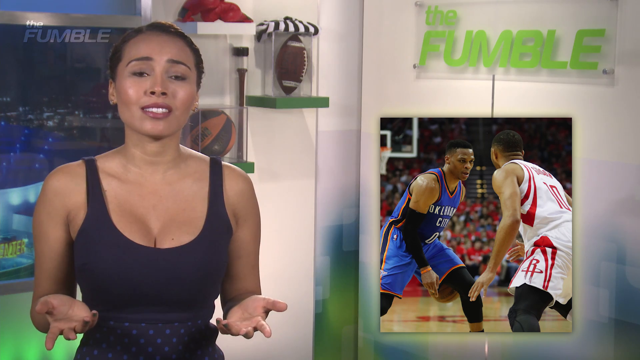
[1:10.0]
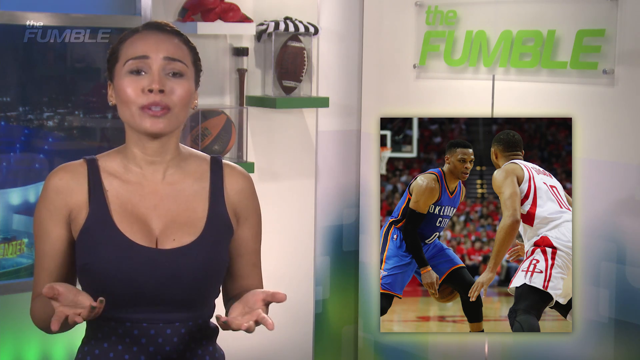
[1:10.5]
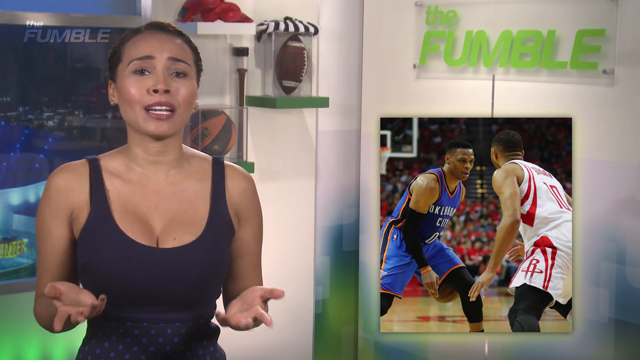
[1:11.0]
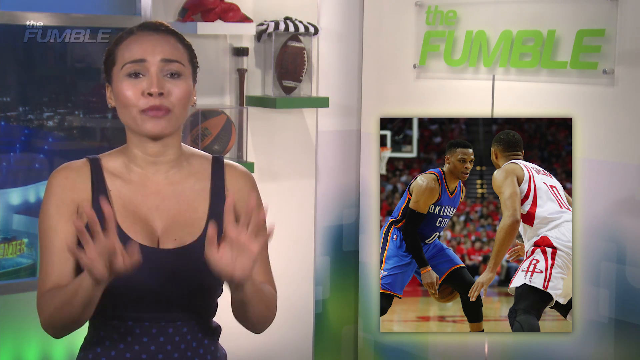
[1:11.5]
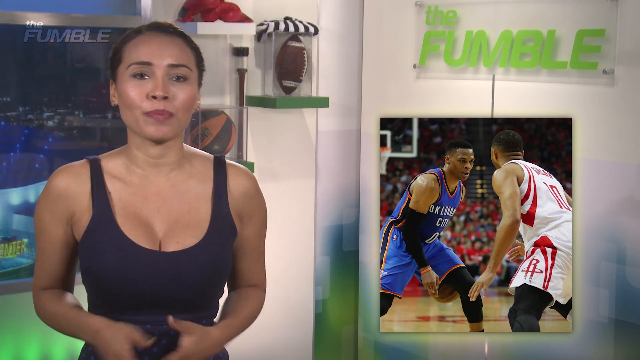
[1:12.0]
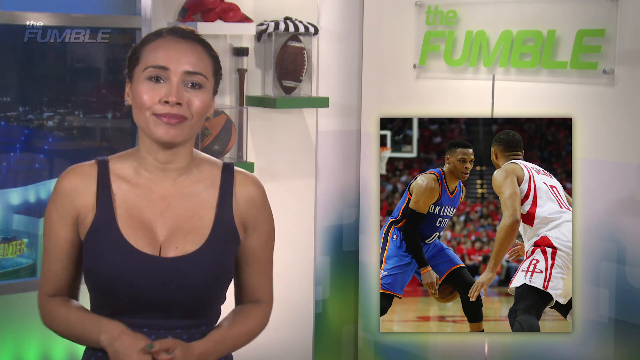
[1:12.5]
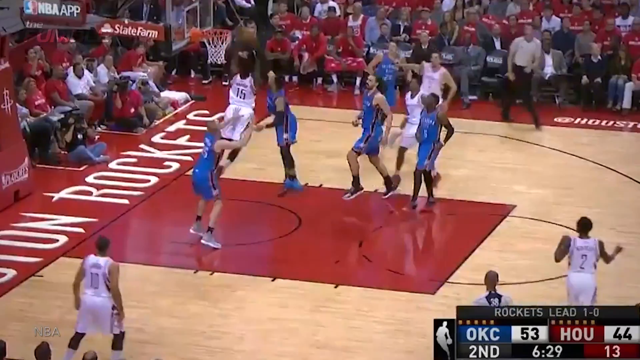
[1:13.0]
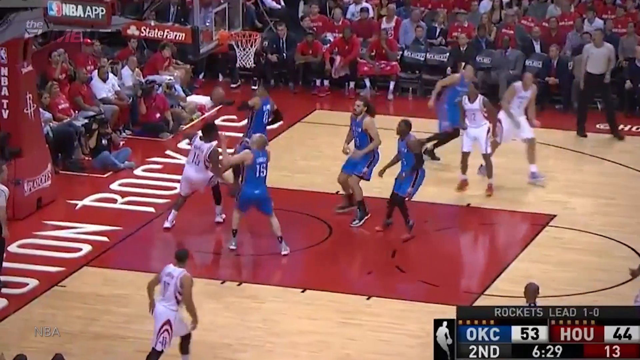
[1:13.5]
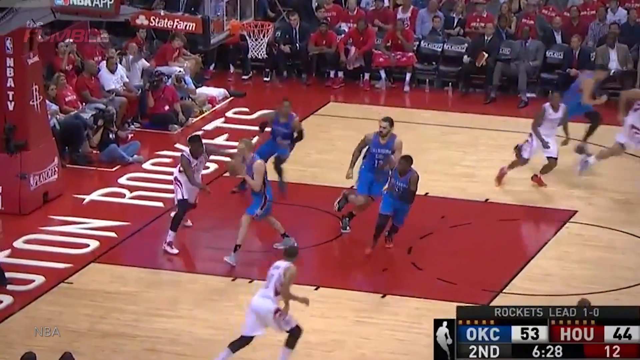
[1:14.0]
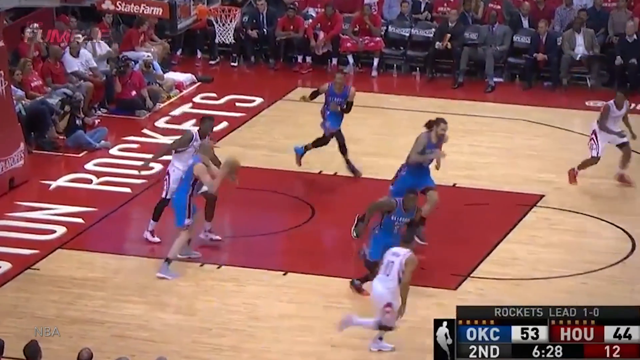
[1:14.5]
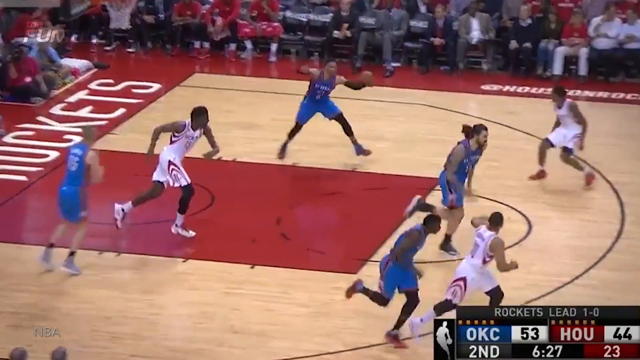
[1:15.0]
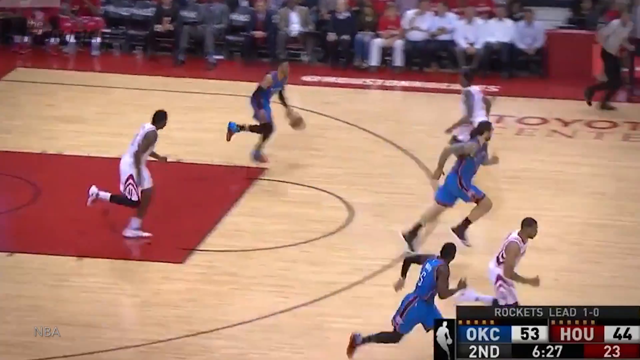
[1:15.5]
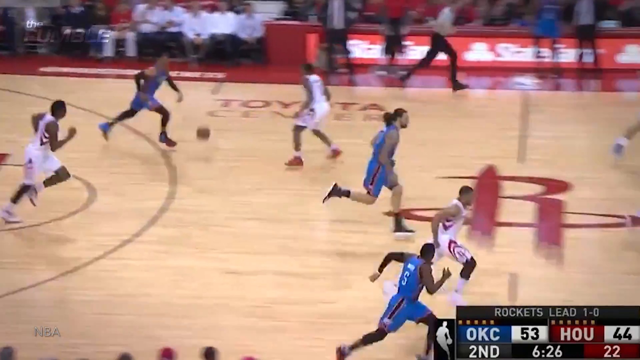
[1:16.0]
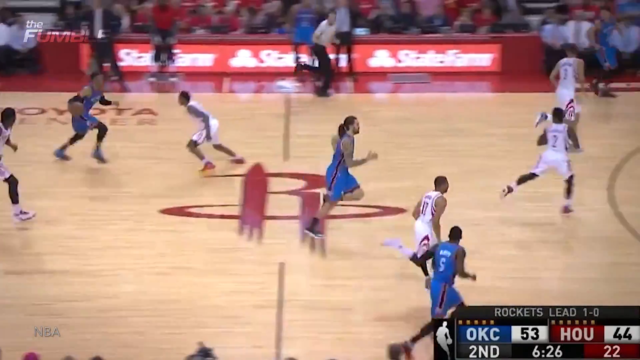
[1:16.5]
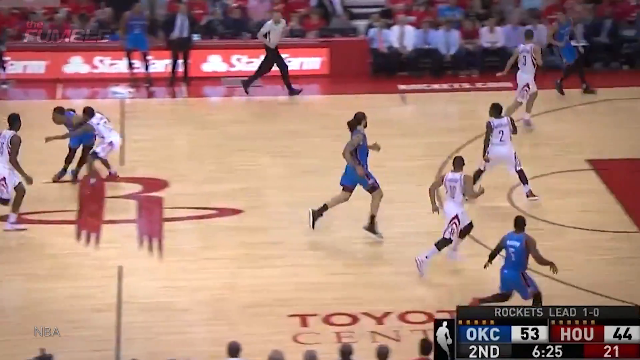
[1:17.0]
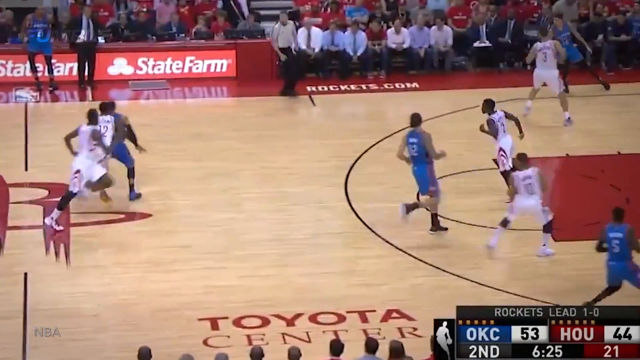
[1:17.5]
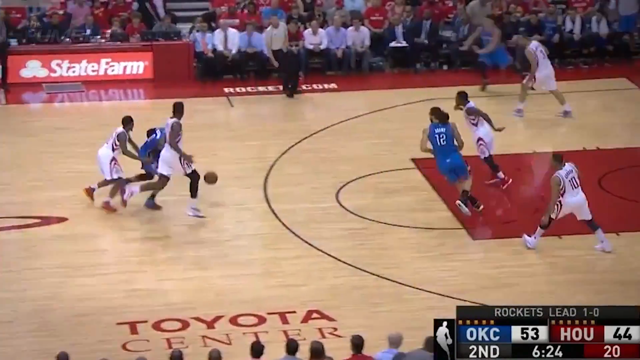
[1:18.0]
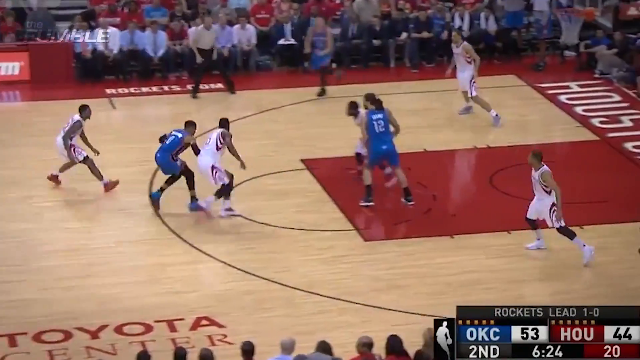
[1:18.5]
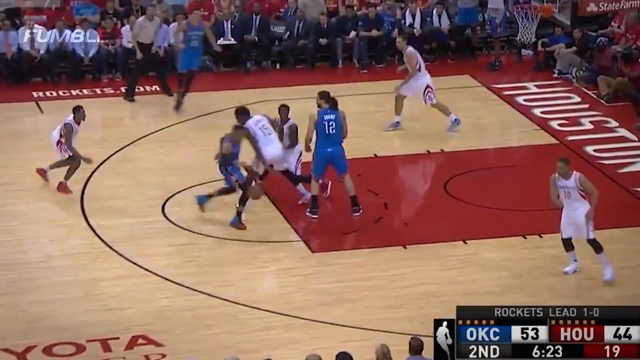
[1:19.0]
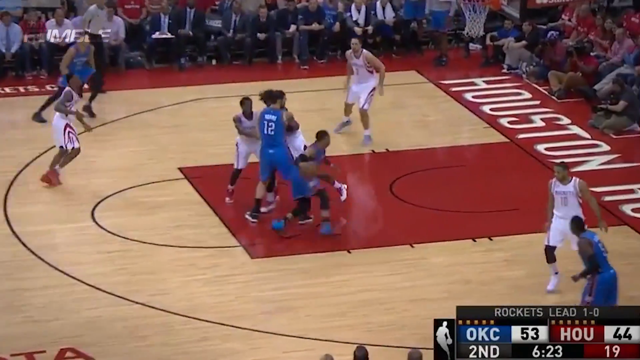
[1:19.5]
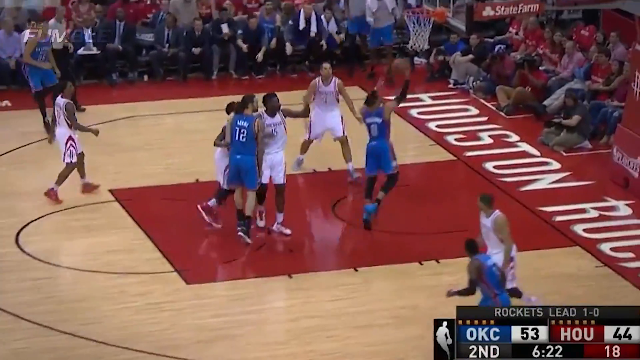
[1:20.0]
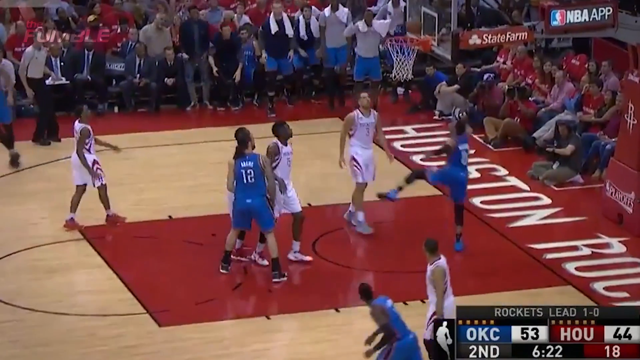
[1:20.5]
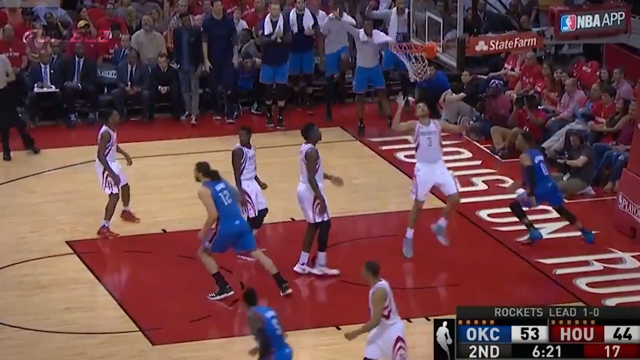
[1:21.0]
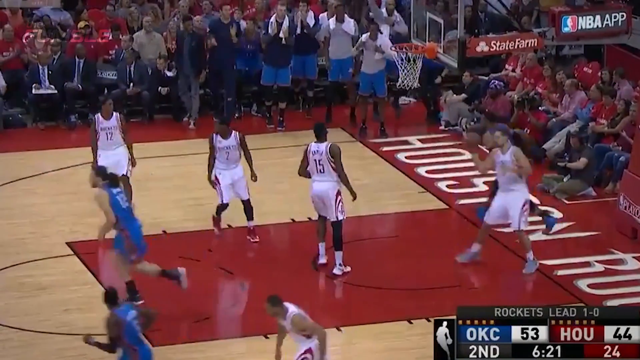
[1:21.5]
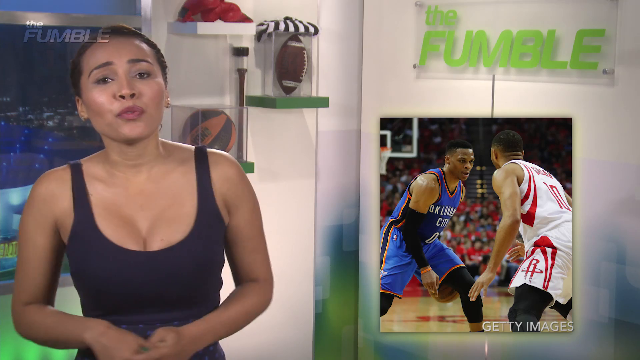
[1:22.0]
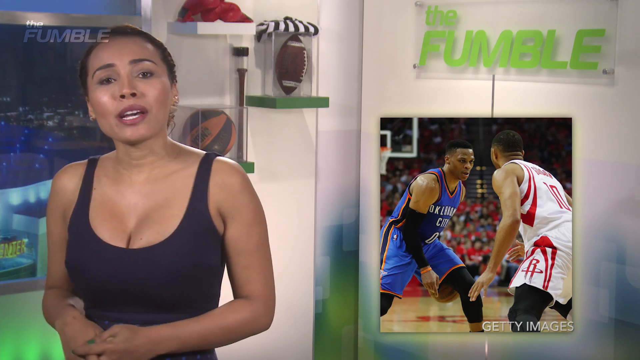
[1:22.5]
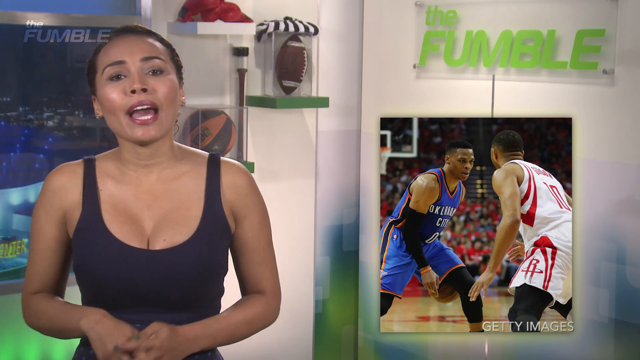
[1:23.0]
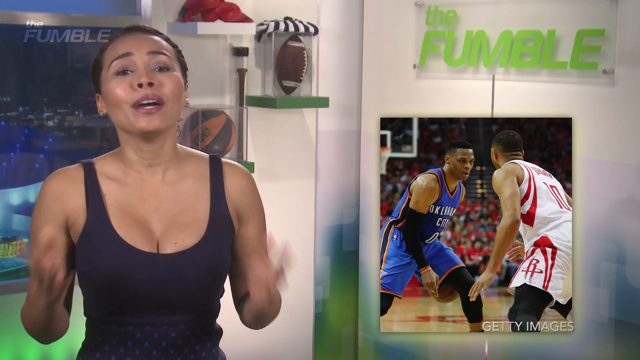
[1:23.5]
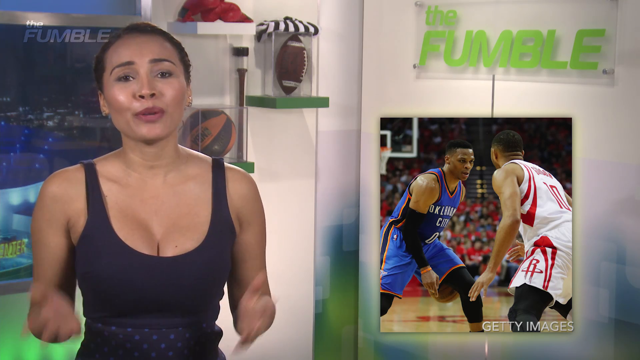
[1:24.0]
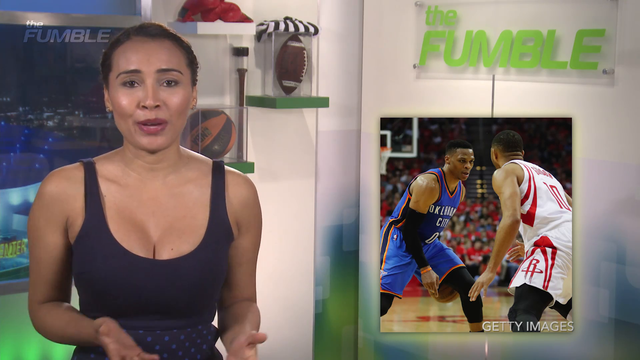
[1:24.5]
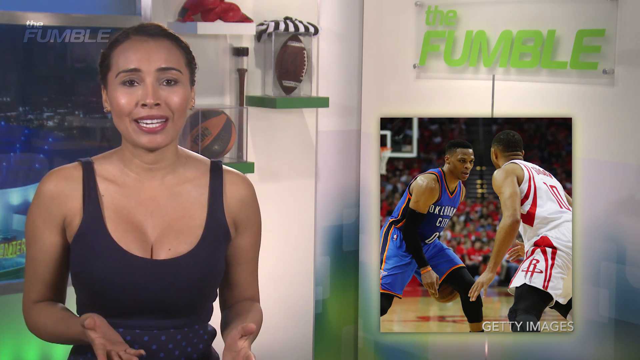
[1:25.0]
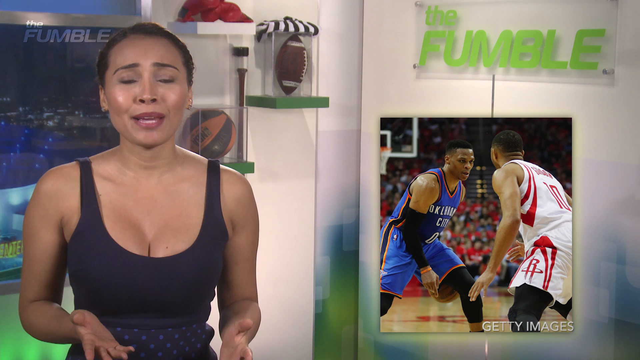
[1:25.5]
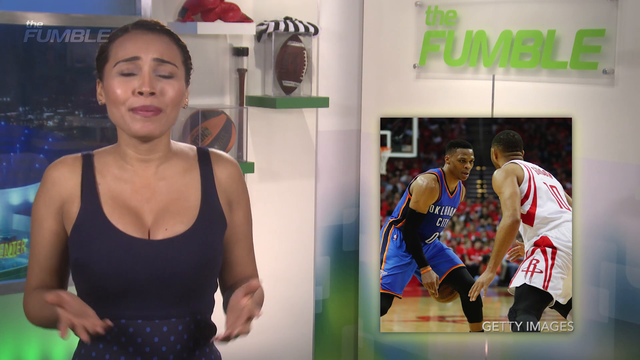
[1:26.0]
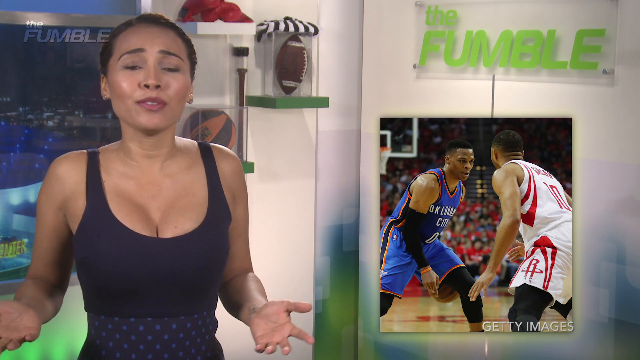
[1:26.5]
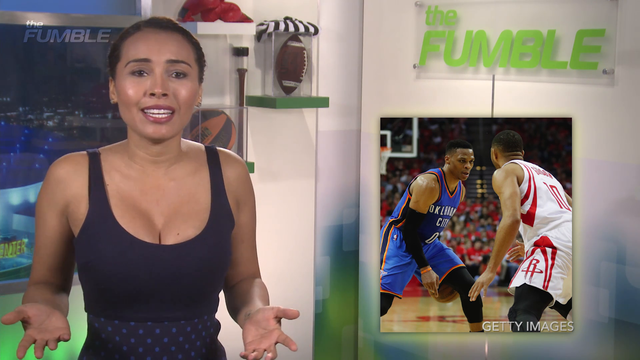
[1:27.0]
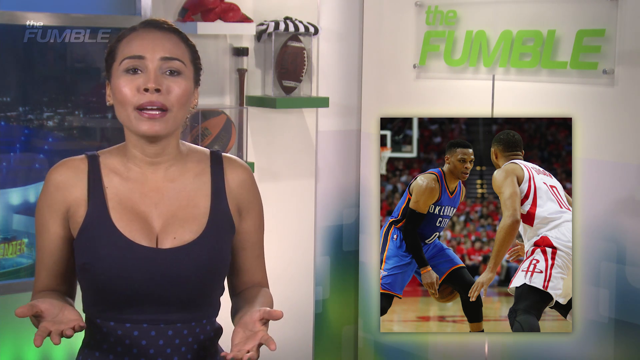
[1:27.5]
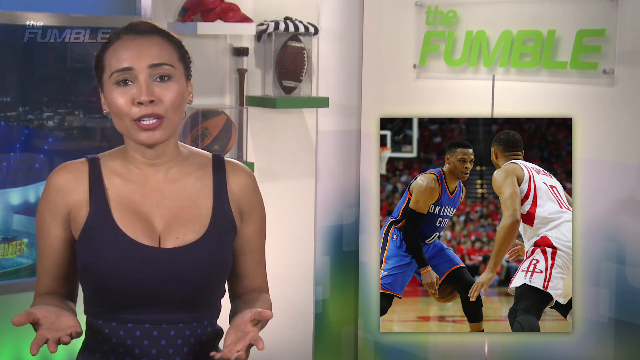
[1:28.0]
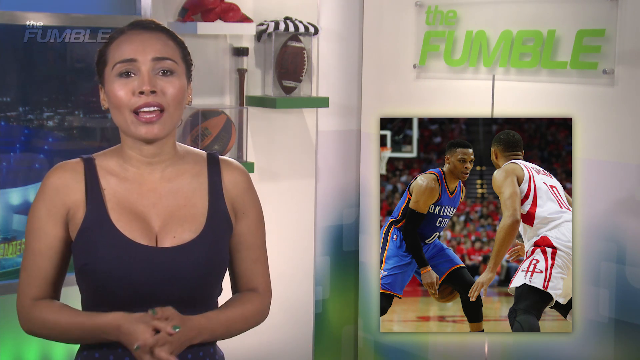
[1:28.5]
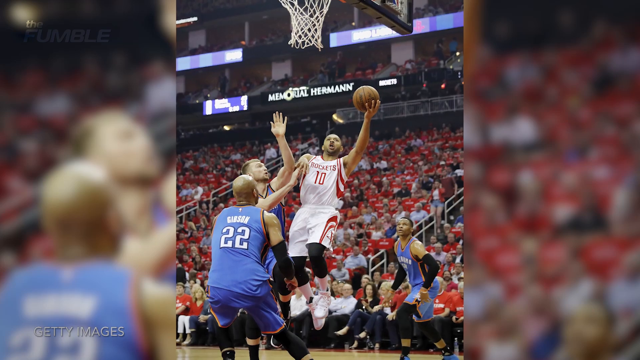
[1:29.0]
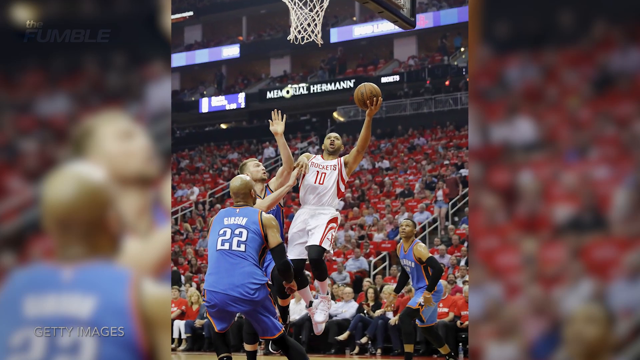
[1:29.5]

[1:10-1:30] The play by Oklahoma City's number 0 is shown, in which he gets past every Houston Rockets player after the Rockets fail to score, and then scores. The score information shows the Rockets leading the series 1-0, while in this game Oklahoma City leads 53-44, in the second half with 6 minutes and 23 seconds left in the period. Most of the footage is this play, which is shown repeatedly, along with the presenter continuing to gesture as she talks.